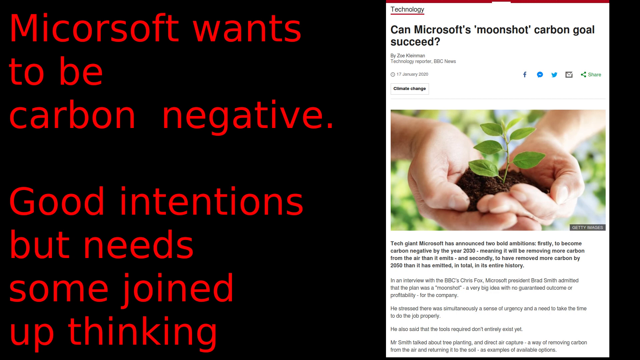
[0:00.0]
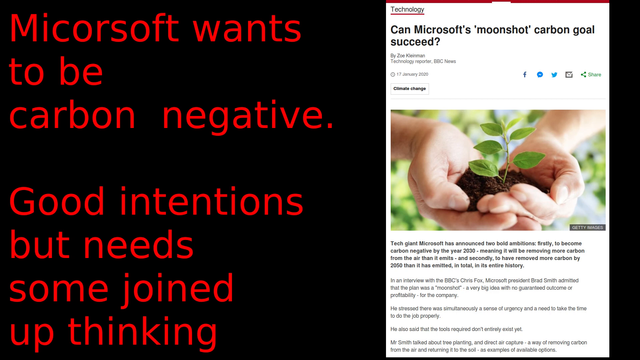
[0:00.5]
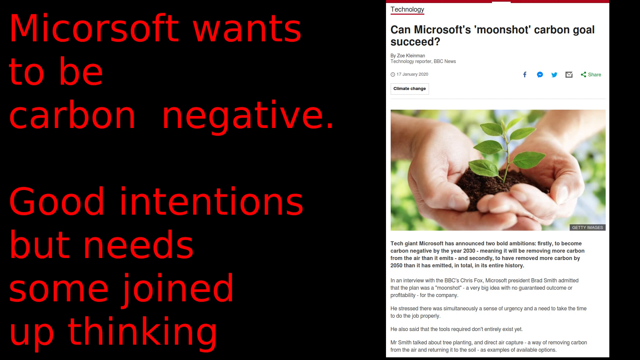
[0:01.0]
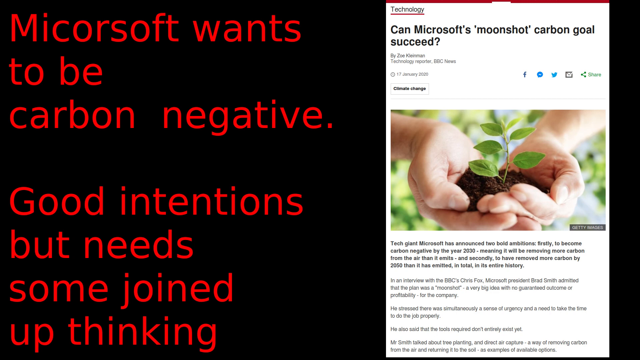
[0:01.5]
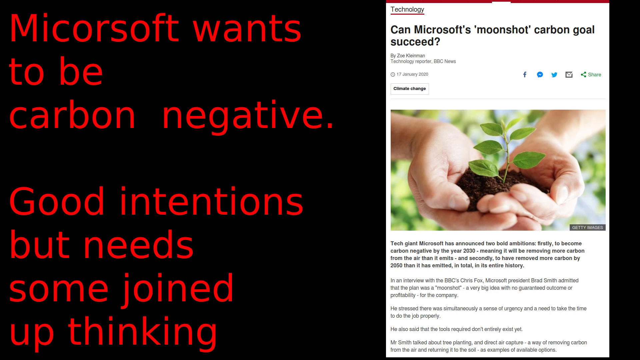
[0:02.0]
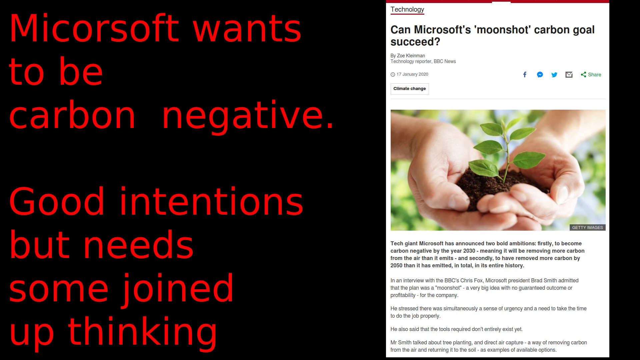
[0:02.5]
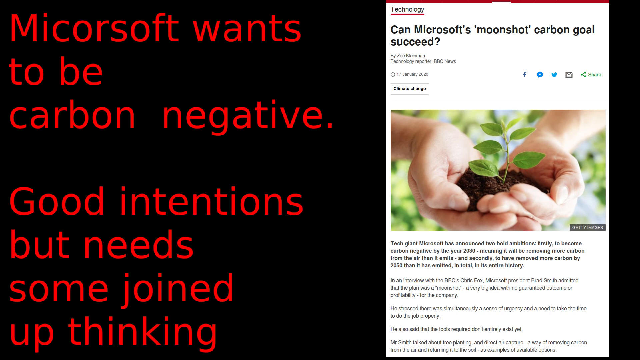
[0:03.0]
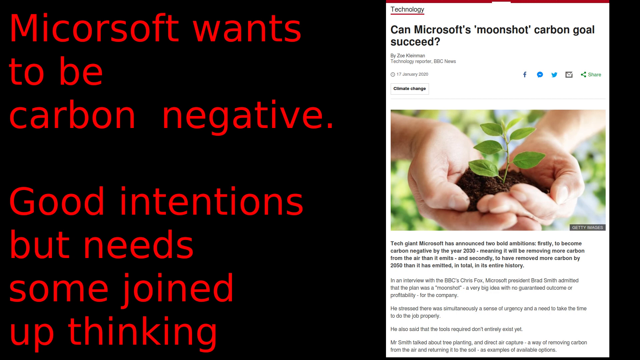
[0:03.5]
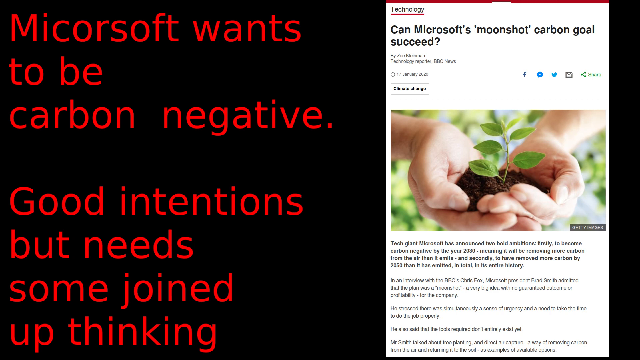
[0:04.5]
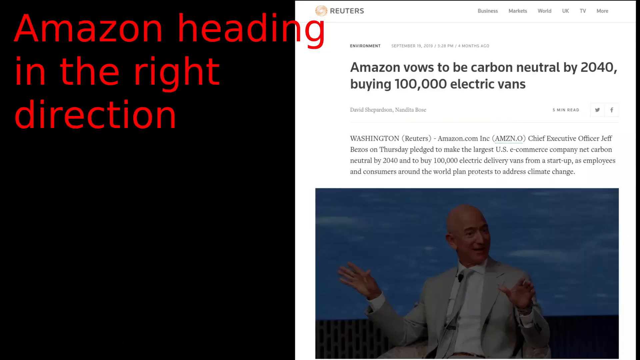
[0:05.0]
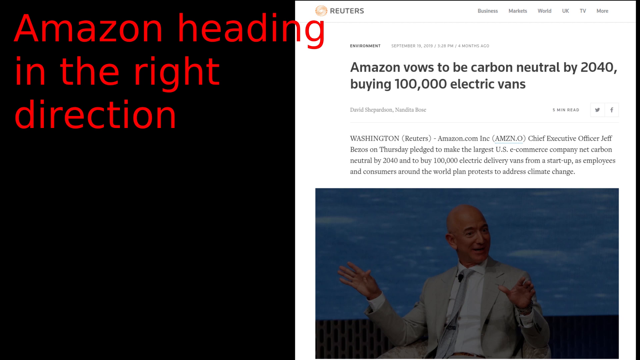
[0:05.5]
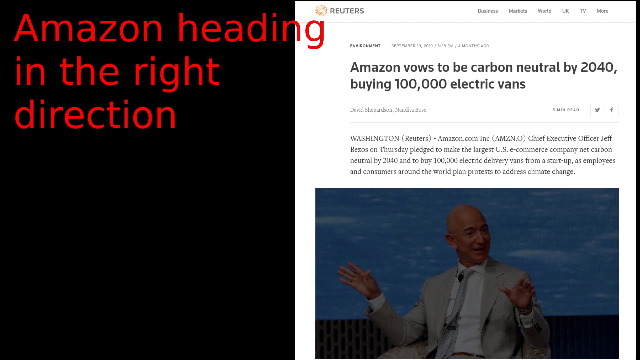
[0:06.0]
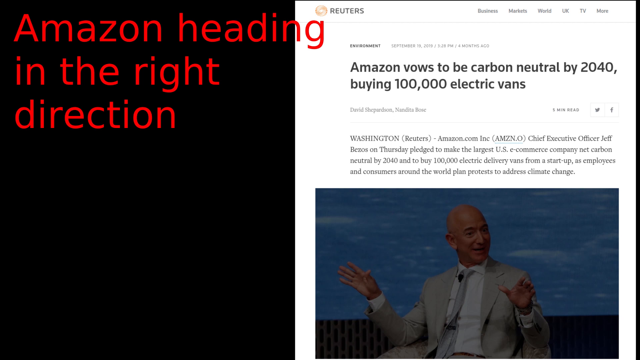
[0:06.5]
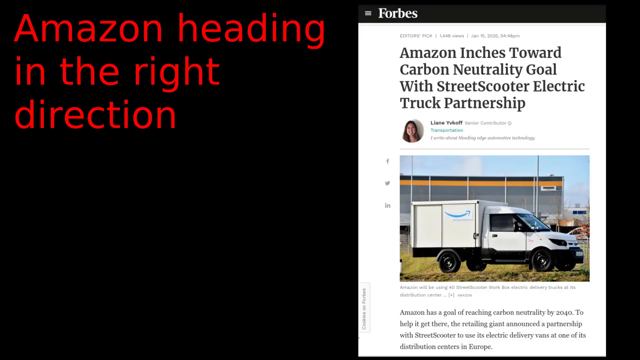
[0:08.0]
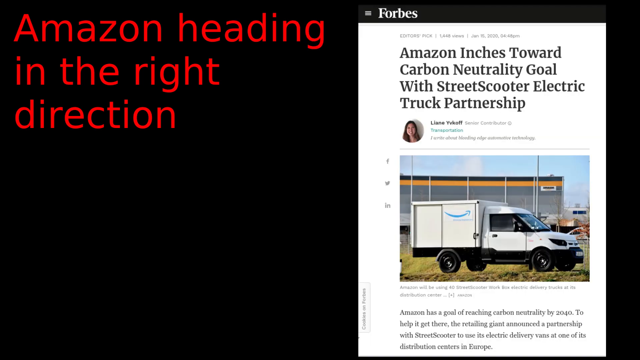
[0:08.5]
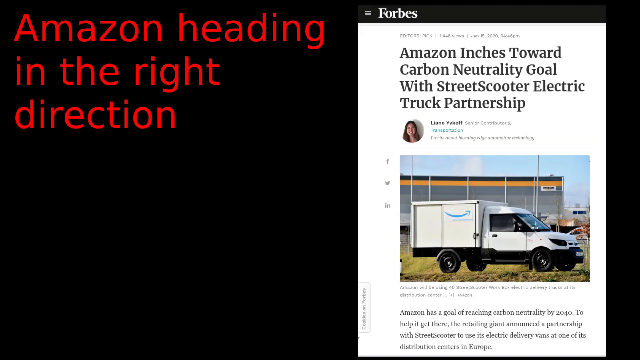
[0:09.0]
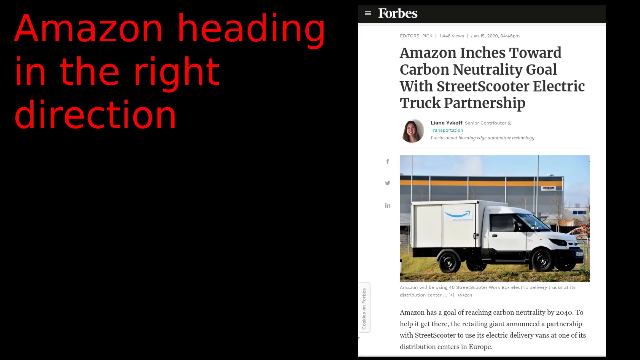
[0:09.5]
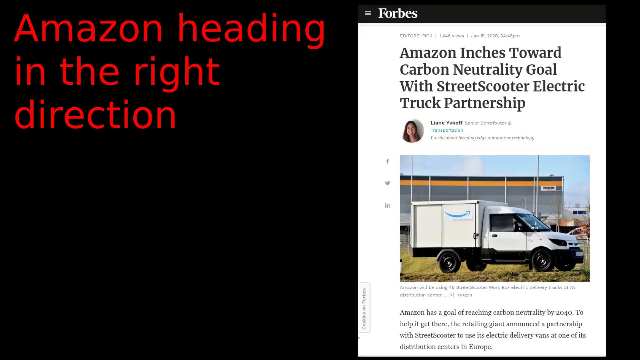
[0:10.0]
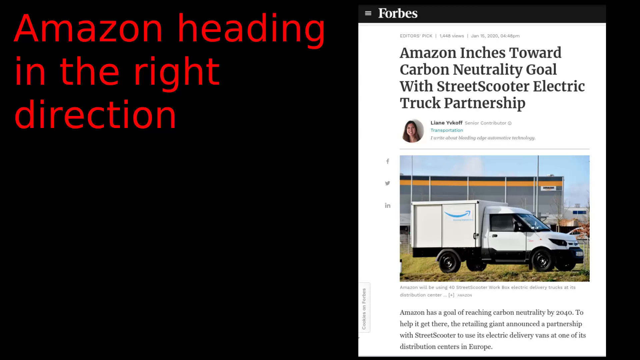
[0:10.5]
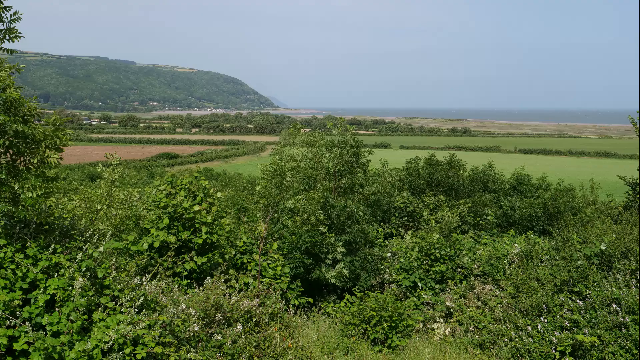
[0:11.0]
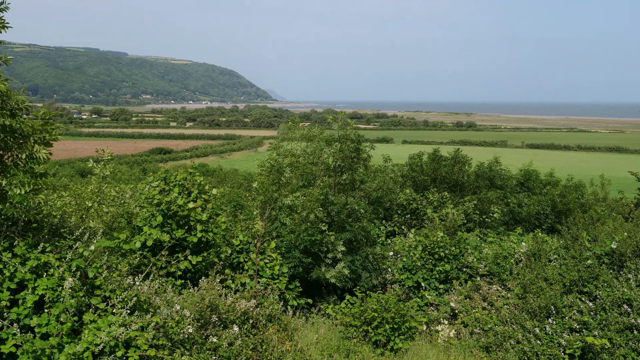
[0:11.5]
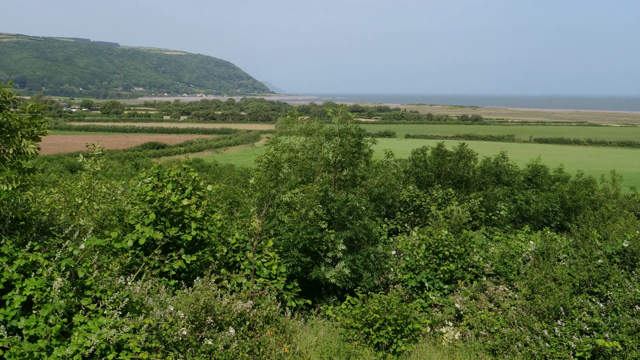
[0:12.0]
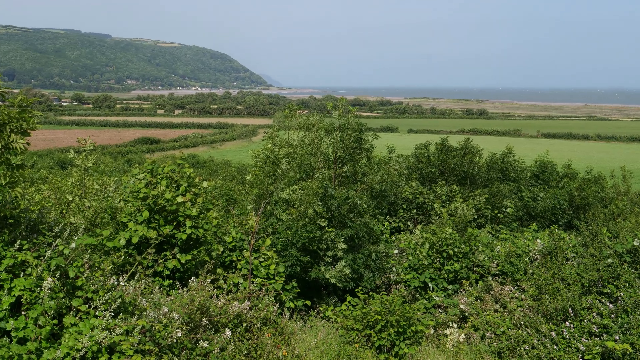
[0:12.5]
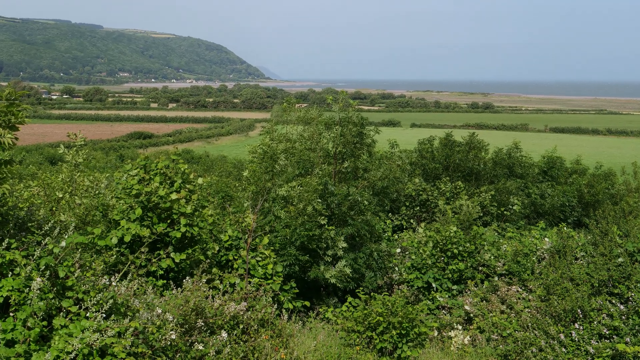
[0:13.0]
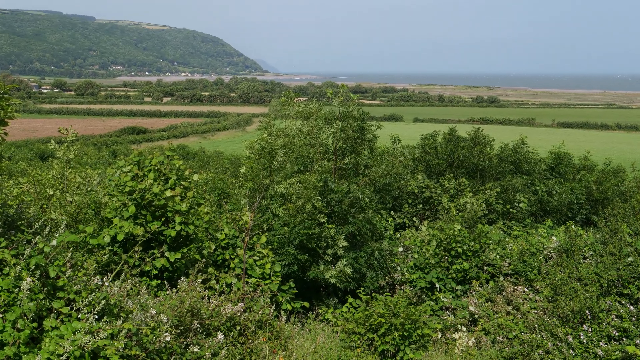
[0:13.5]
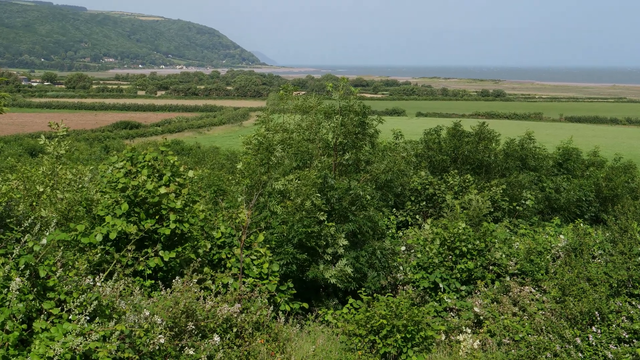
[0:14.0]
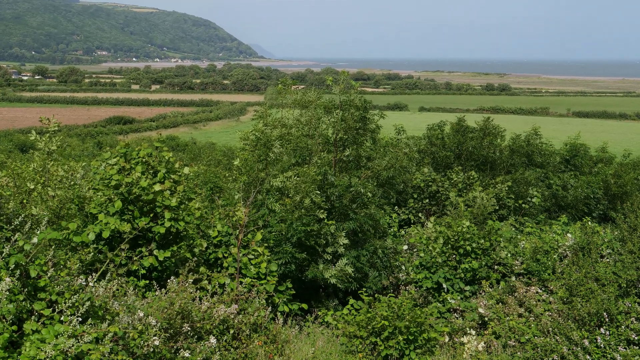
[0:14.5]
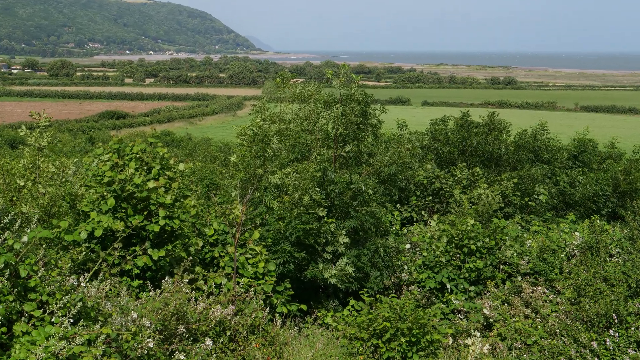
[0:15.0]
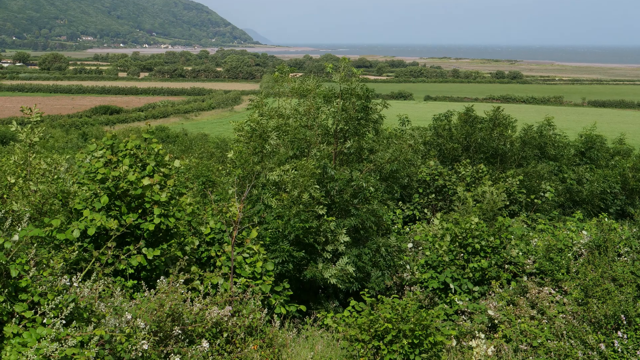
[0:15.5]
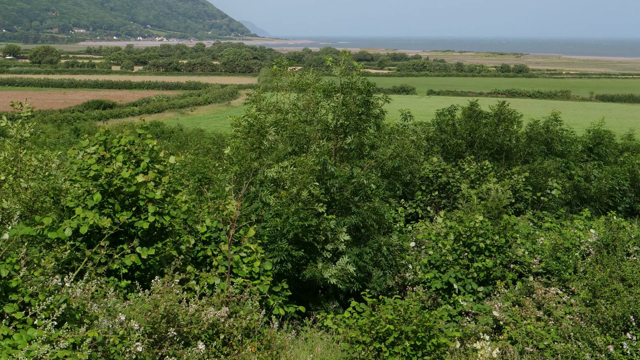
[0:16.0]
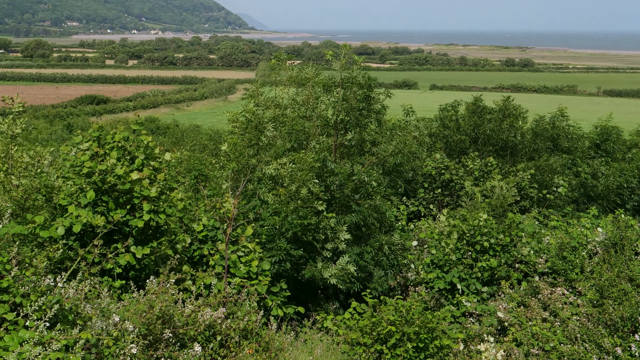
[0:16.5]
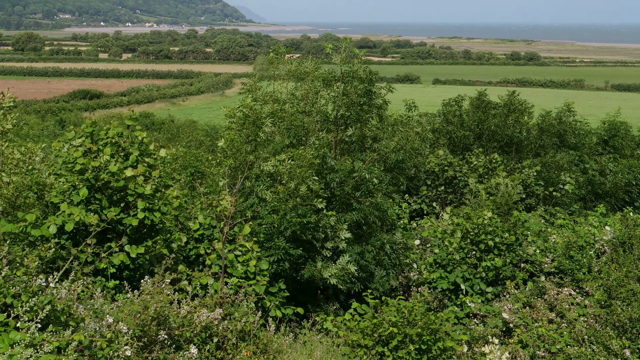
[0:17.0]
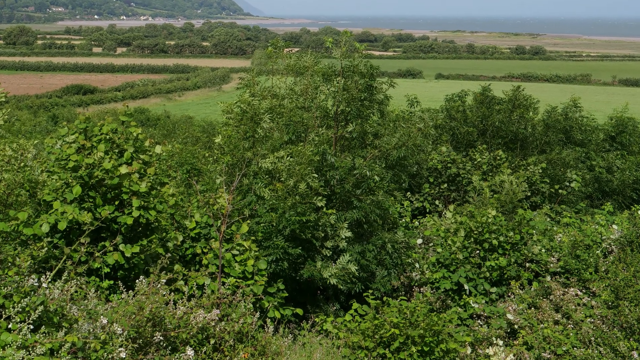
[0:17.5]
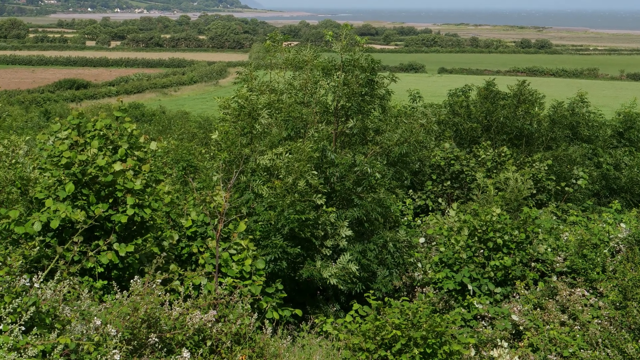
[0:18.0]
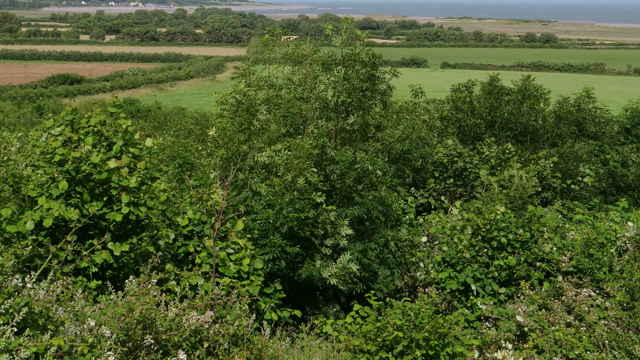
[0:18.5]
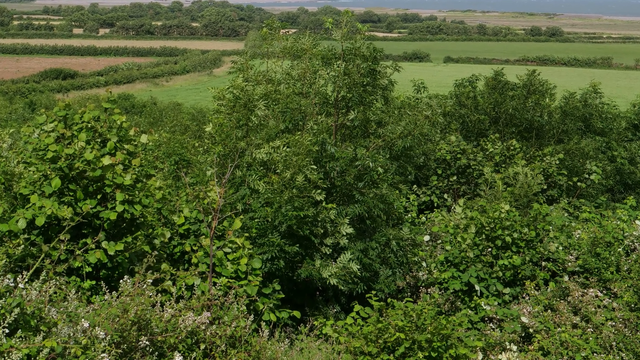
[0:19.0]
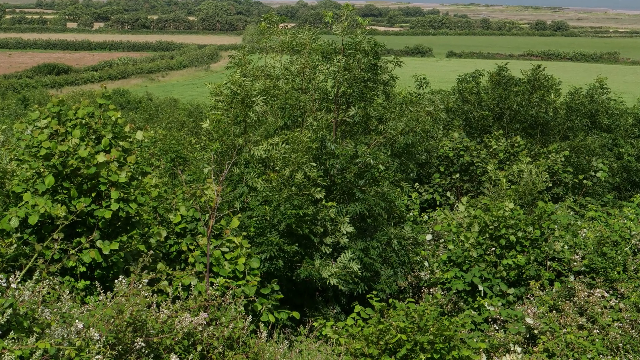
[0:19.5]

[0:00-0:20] A black background has red writing on the left side of the screen that reads "Microsoft wants to be carbon negative", then, after a space, "good intentions but needs some joined up thinking". On the right side is a white, vertical, rectangle-shaped box, and in the centre of the white screen is an image of a hand cupping some flowers that are growing, some leaves and some soil. At the top of the screen it says "can Microsoft moonshots carbon goal succeed". Next, an image appears in the top left corner of the screen, again with the black background and red writing, this time reading "Amazon heading in the right direction". On the right side of the screen is a more zoomed-in view of the white background with information in it, images at the bottom and text at the top. The right side then changes to show different text and different images: there is an image of a van, and the text says "Amazon inches toward carbon neutrality goal with Street Scooter electric truck partnership". A zoomed-out view of a landscape follows, with the seaside in the far distance toward the right corner of the screen.